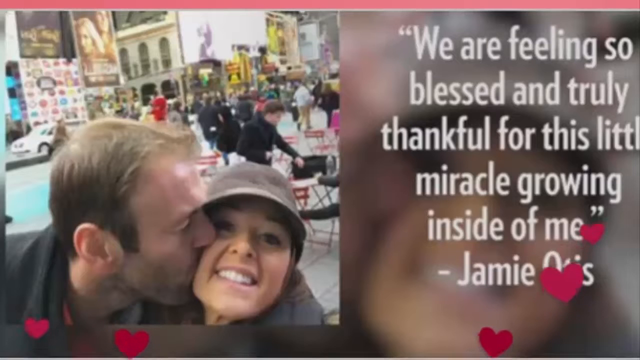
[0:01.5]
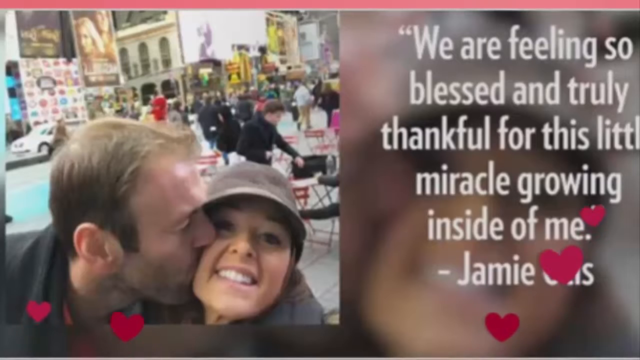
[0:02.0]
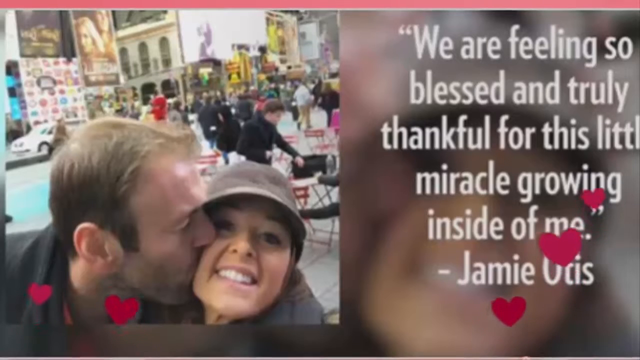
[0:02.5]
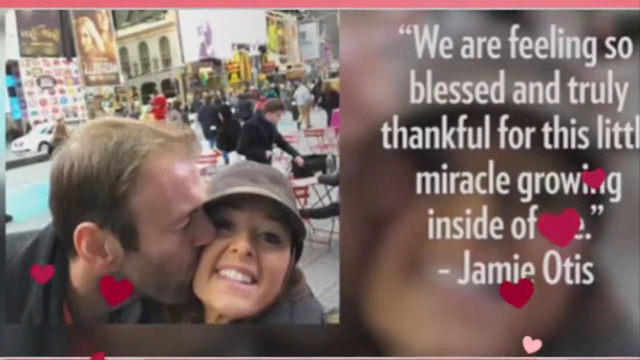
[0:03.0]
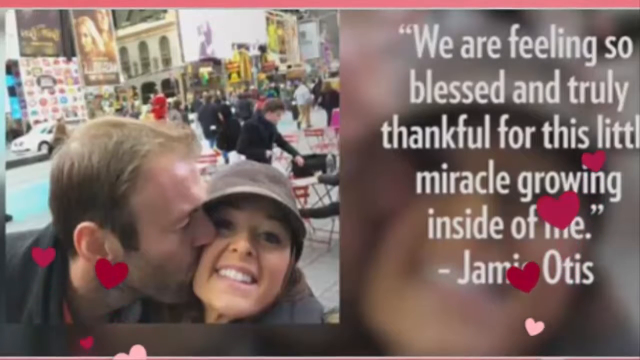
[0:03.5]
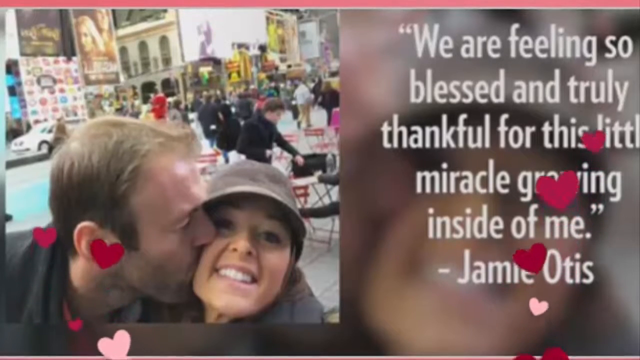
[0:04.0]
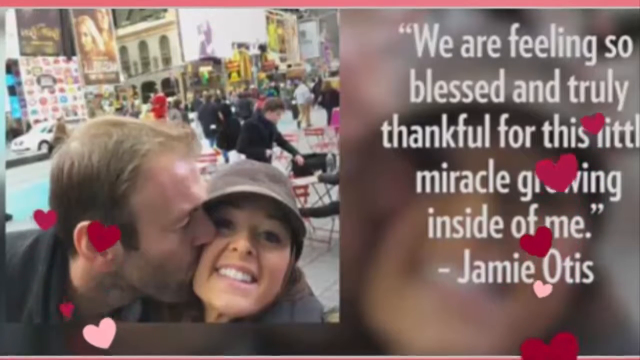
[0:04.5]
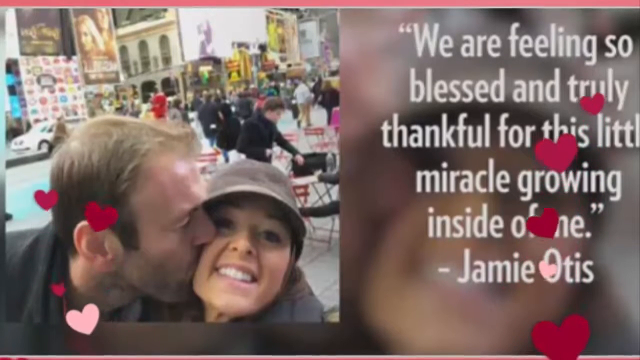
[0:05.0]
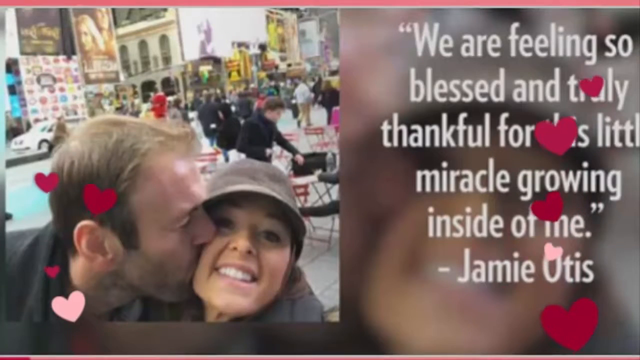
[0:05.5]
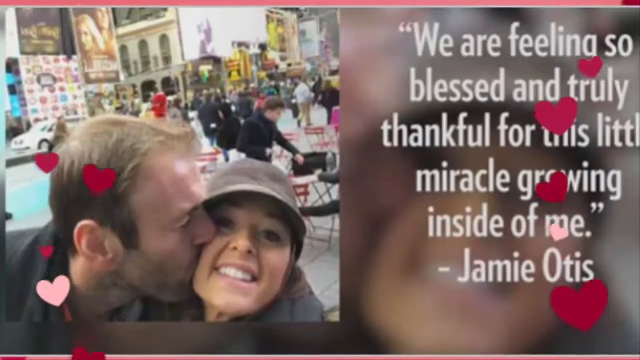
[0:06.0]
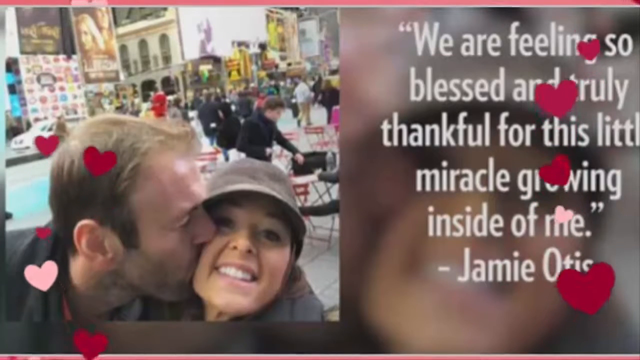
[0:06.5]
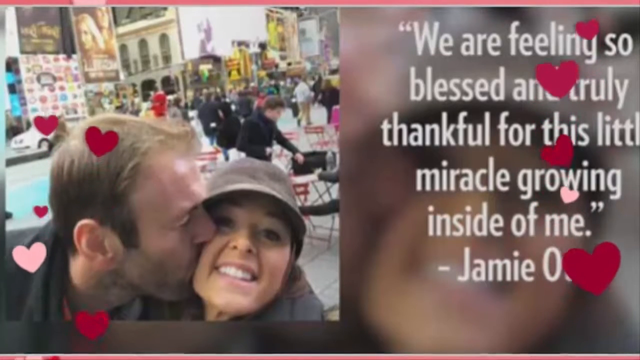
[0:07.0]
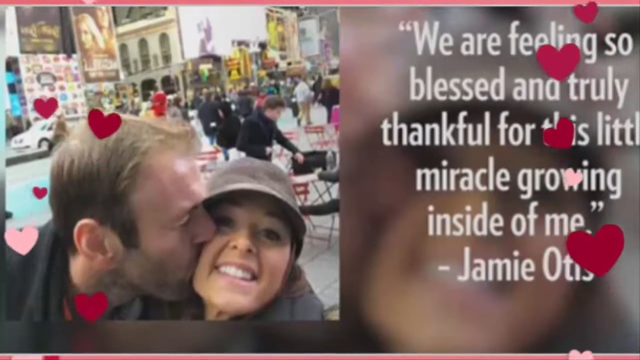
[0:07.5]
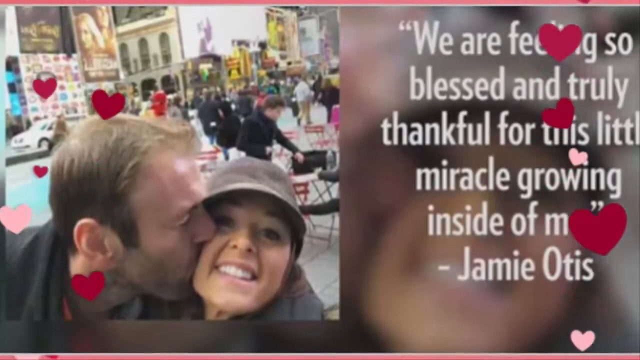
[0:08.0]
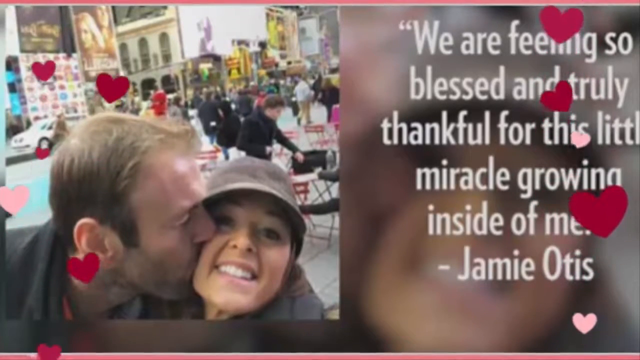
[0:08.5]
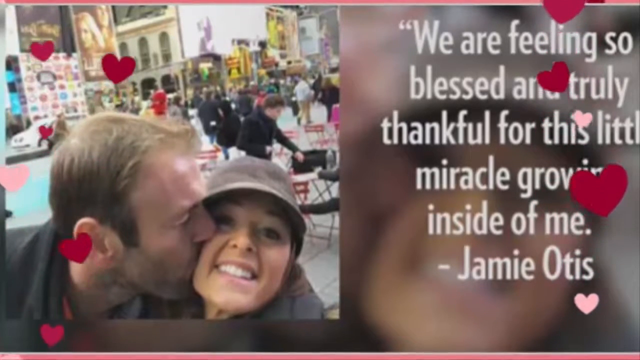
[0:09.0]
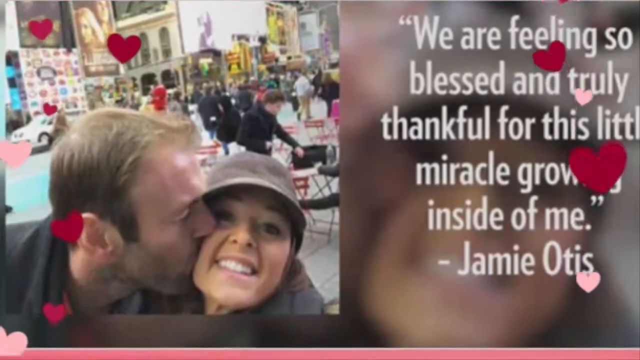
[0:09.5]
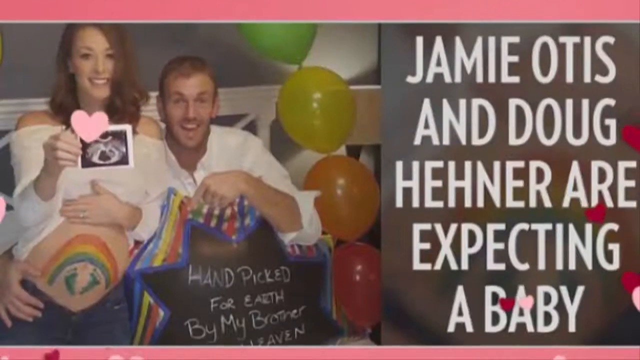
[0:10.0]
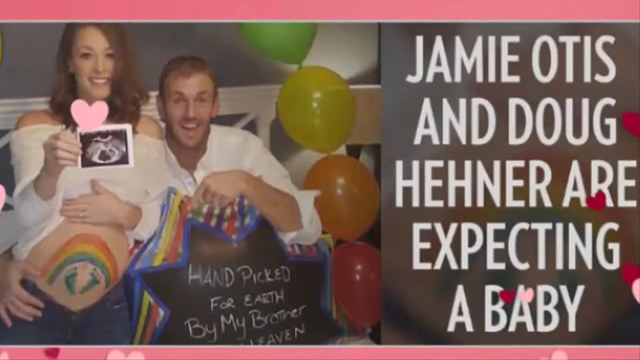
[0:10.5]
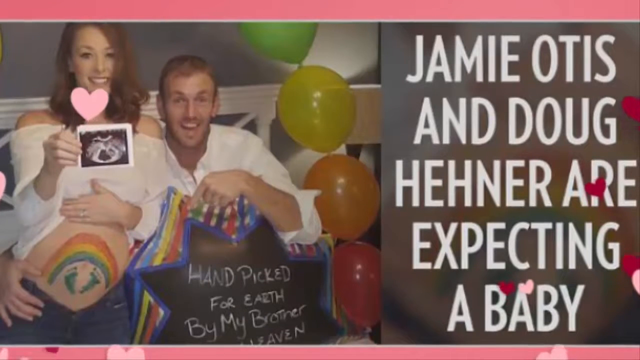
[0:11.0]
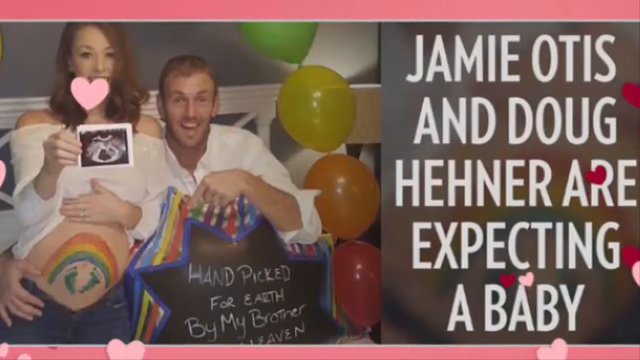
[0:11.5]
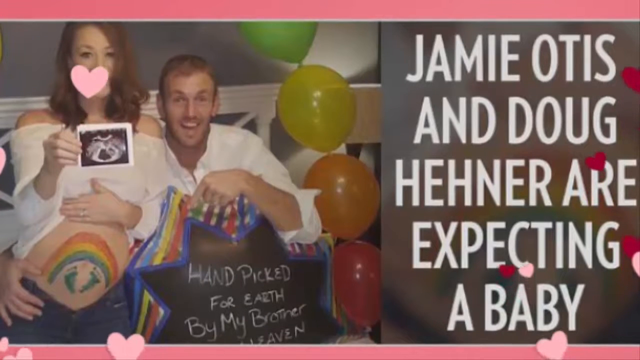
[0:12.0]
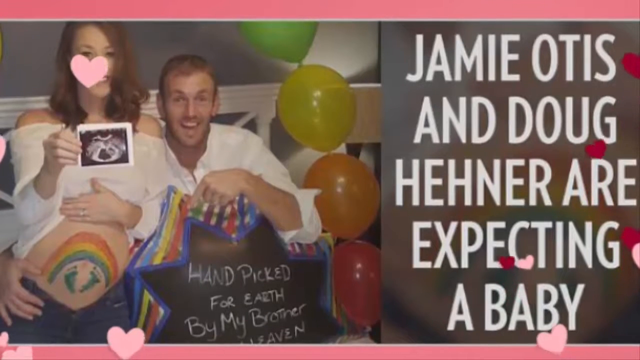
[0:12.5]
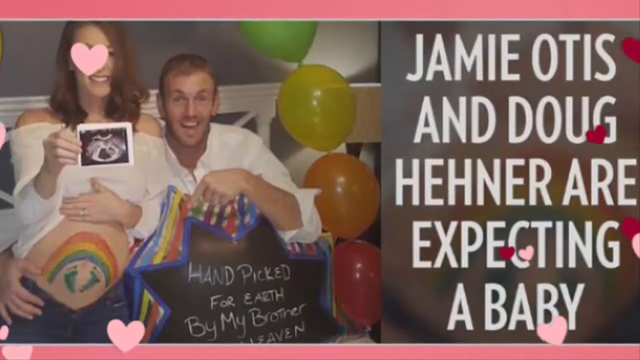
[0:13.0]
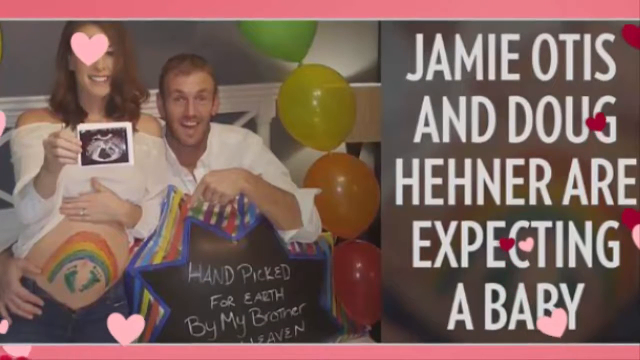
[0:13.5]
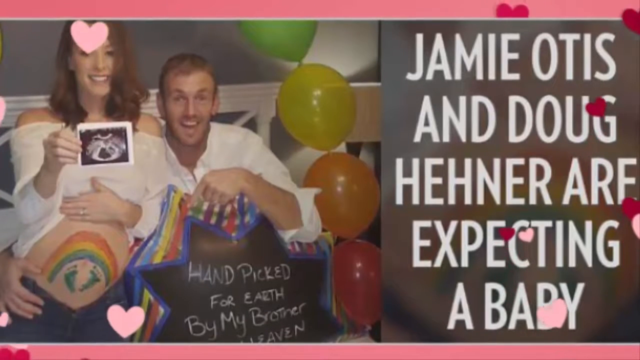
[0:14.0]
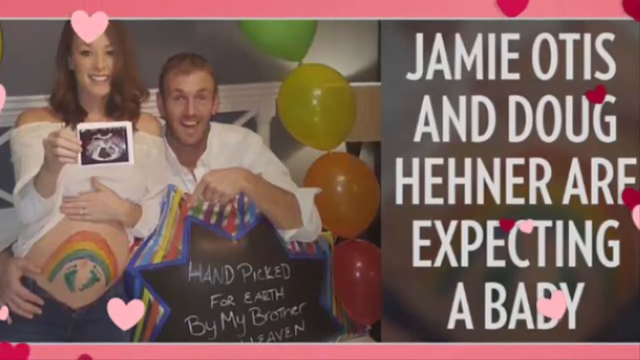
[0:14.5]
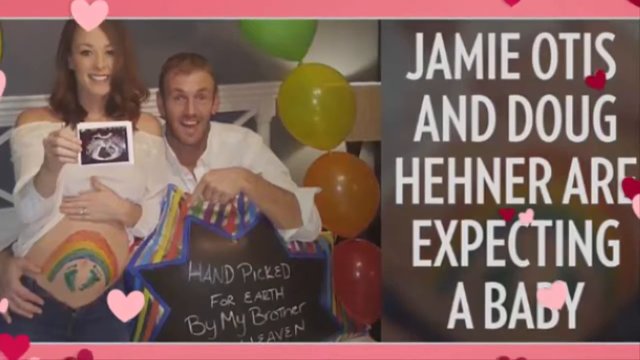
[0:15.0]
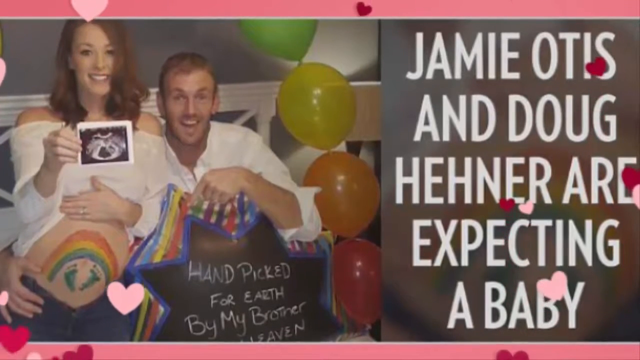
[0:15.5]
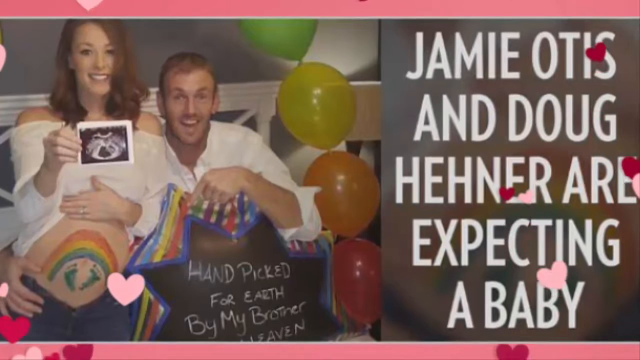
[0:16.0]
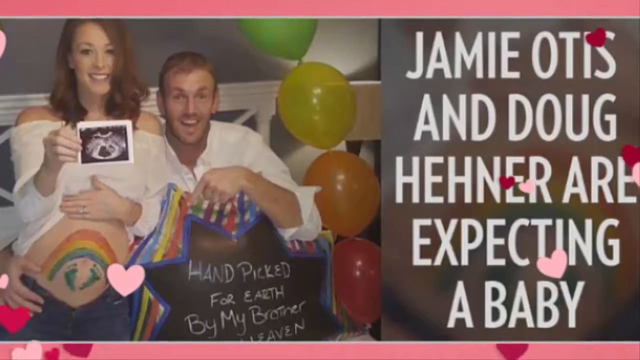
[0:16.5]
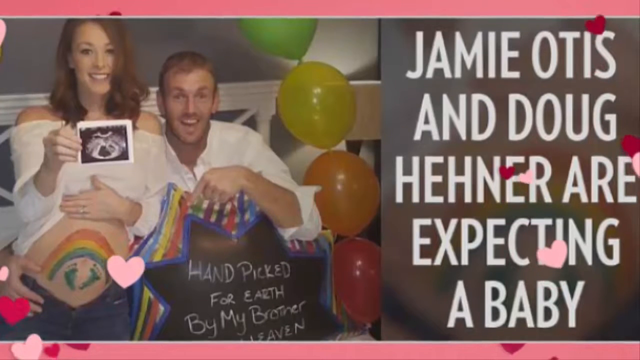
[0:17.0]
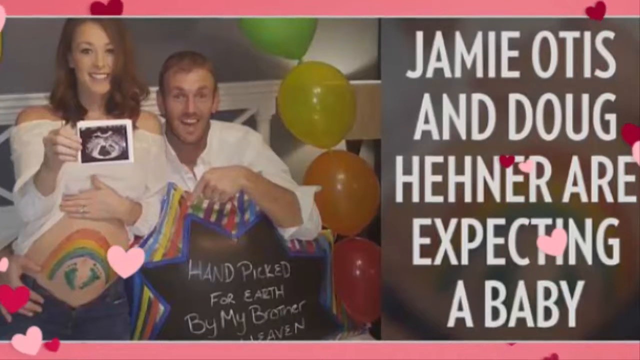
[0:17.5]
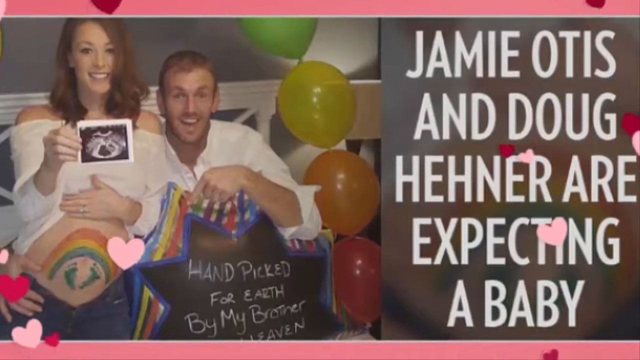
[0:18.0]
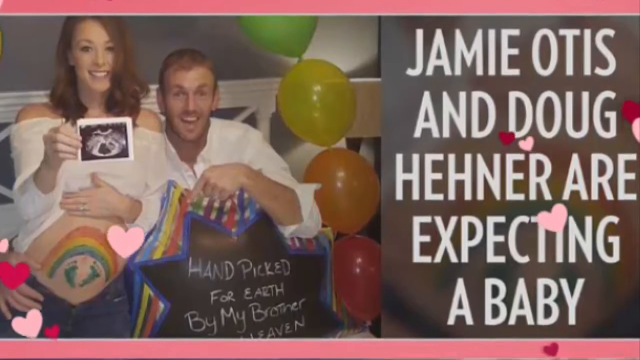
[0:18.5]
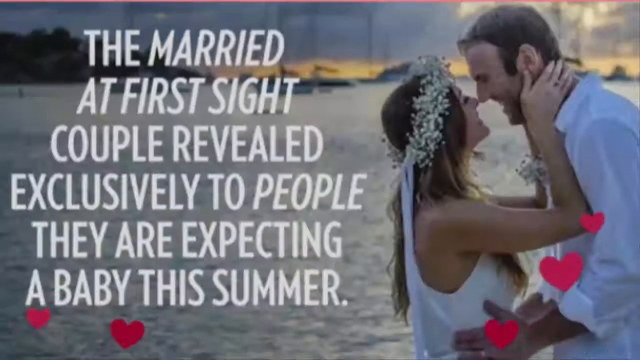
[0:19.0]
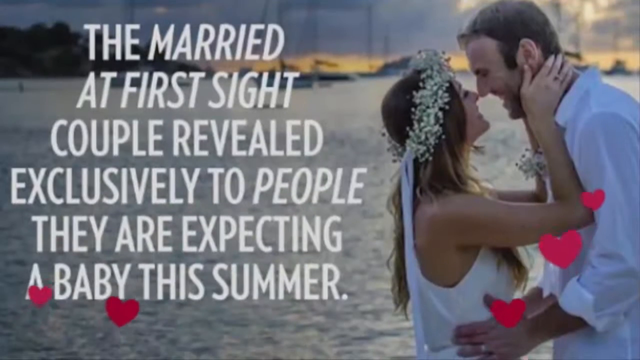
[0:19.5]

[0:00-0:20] Two people are in the foreground: an older man and a lady in a cap. The older man kisses her cheek while she smiles at the camera, showing her teeth. Behind them is a large group of people; the place looks very busy, with people walking up and down and some sitting around a table, and there is a lot of activity in the background. Beside the picture is a post that reads "we are feeling so blessed and so thankful for this little miracle growing inside of me. Jamie O'Keefe". Pink and red love images rise up through the video. Another picture shows a woman and a man sitting together in white clothes, with a number of colored balloons beside them. The post beside them reads "Jamie O'Keefe and Doug Henner are expecting a baby". Another photo appears briefly and then disappears.